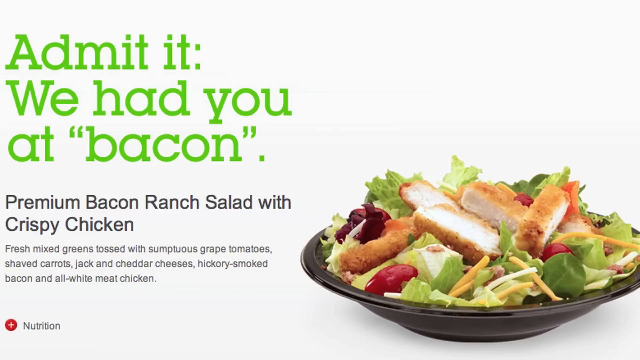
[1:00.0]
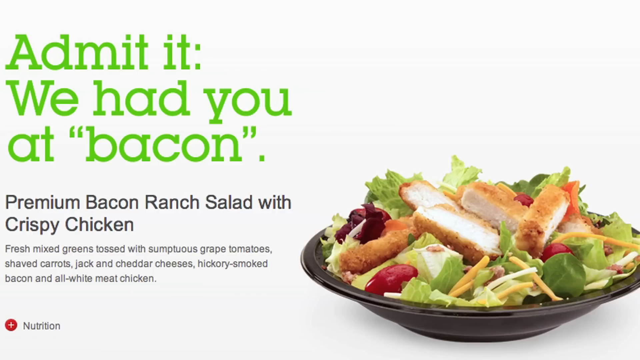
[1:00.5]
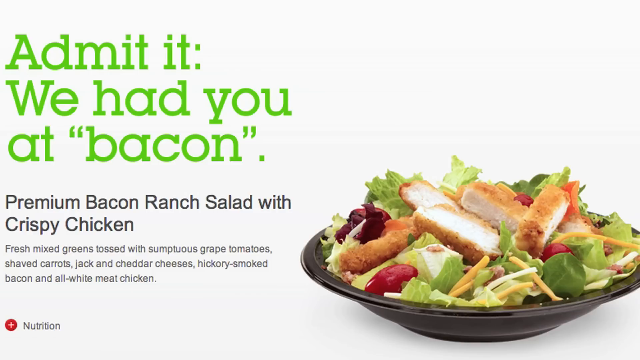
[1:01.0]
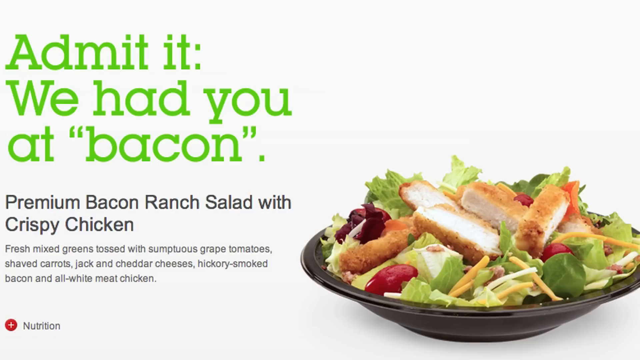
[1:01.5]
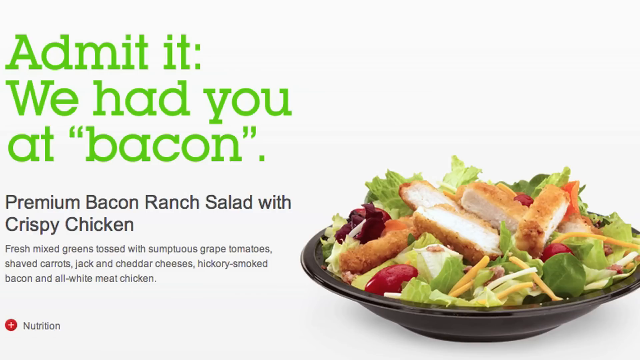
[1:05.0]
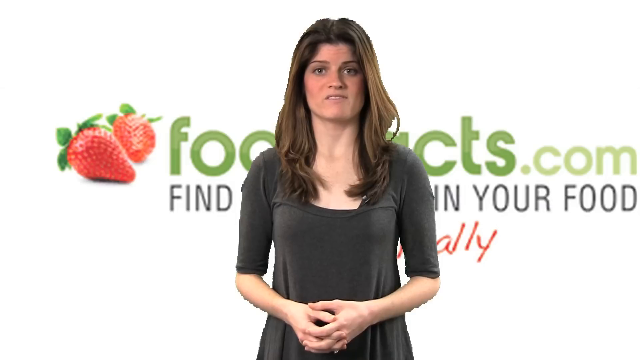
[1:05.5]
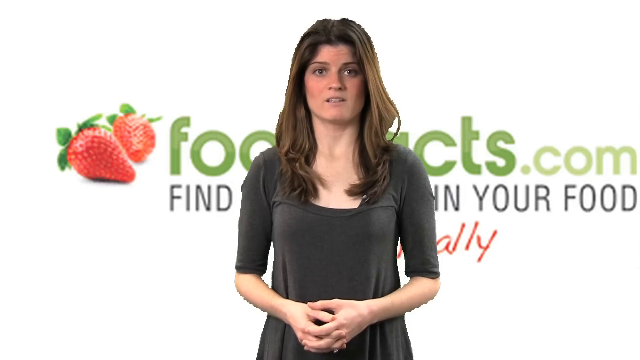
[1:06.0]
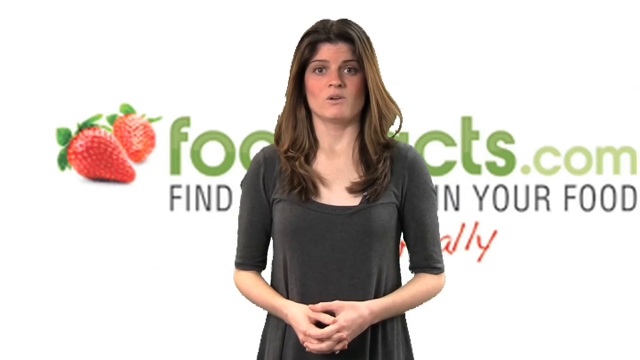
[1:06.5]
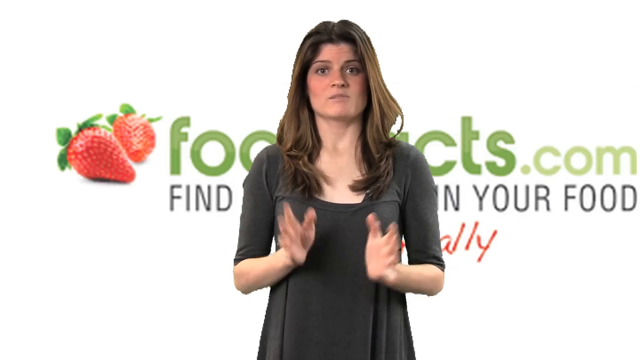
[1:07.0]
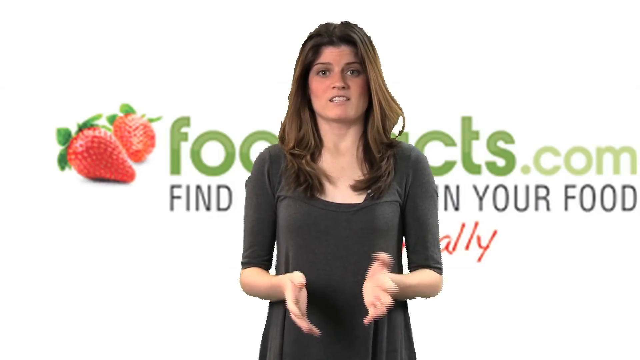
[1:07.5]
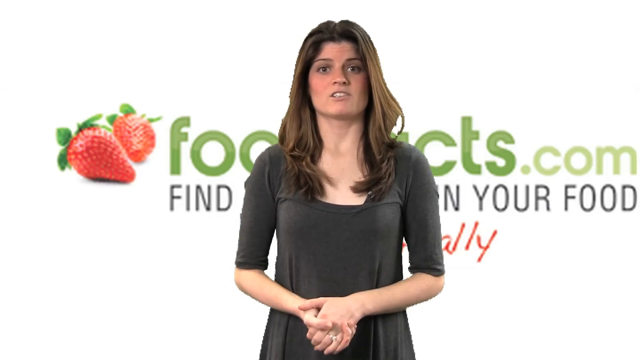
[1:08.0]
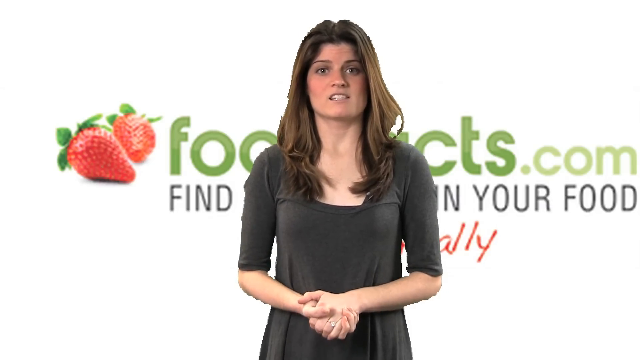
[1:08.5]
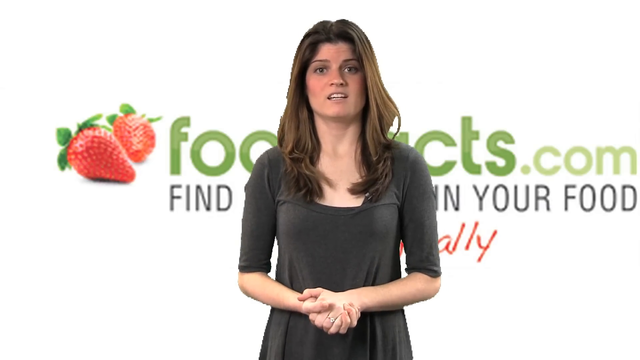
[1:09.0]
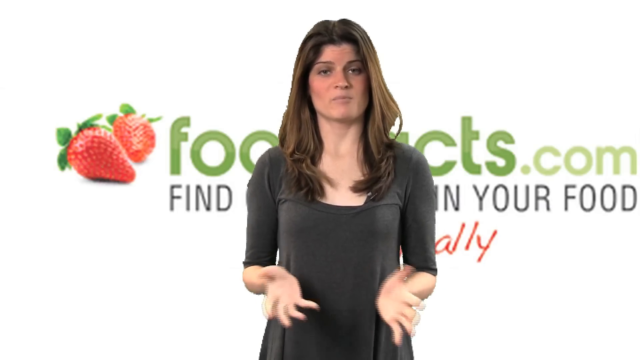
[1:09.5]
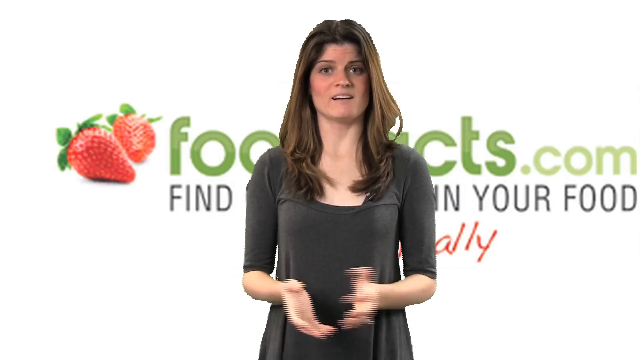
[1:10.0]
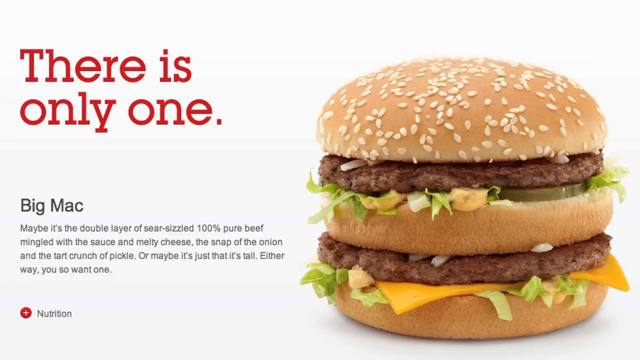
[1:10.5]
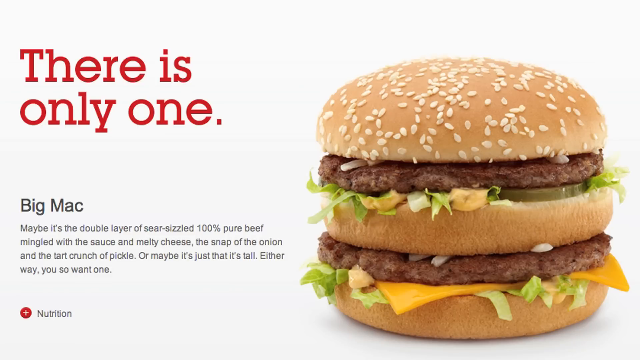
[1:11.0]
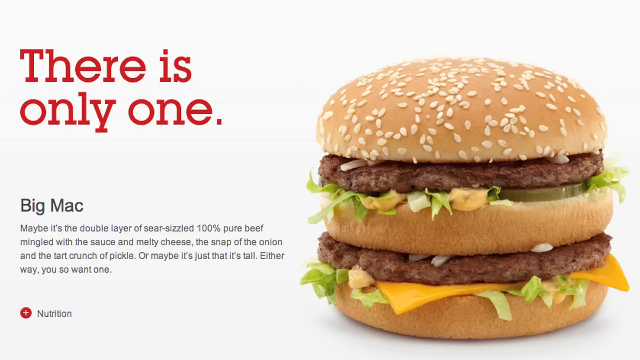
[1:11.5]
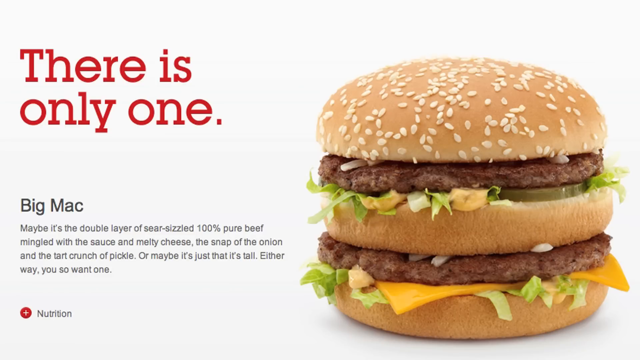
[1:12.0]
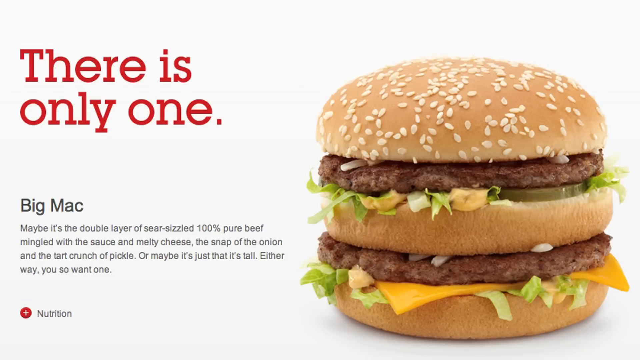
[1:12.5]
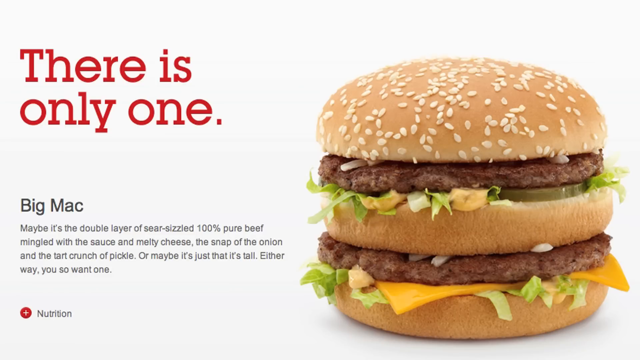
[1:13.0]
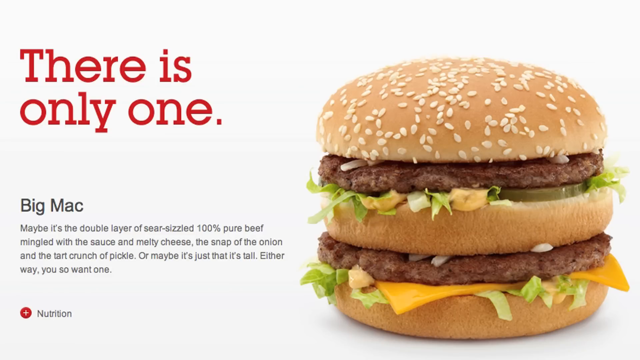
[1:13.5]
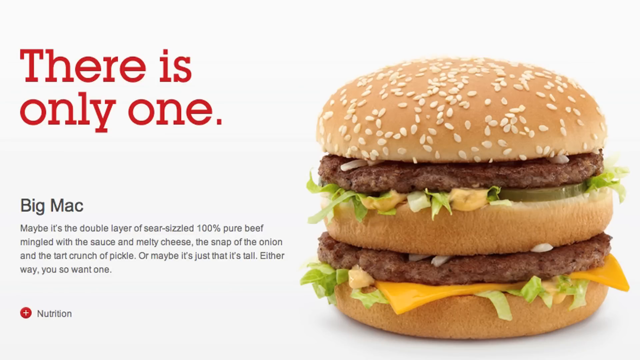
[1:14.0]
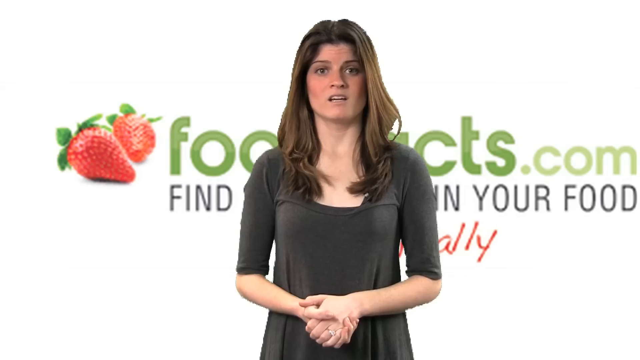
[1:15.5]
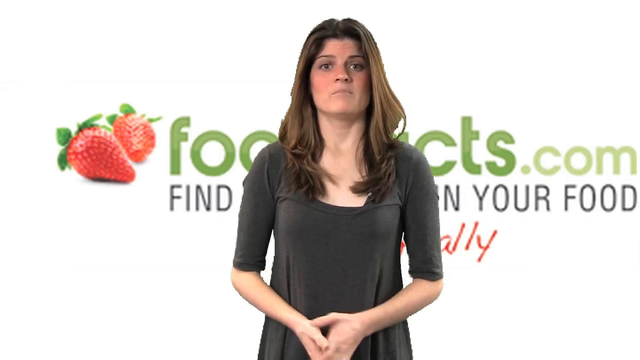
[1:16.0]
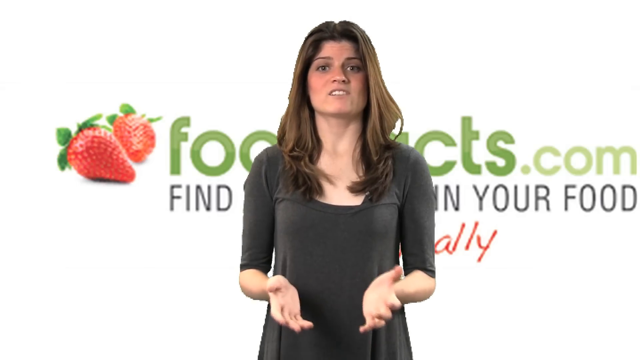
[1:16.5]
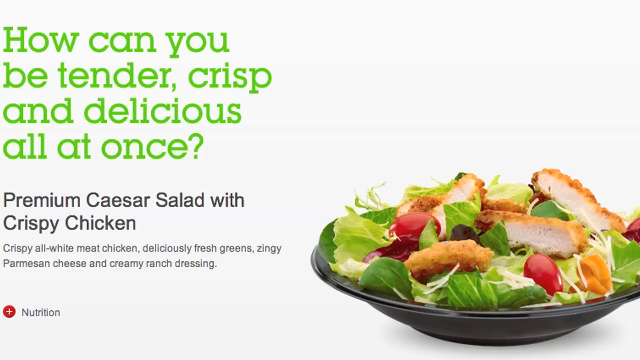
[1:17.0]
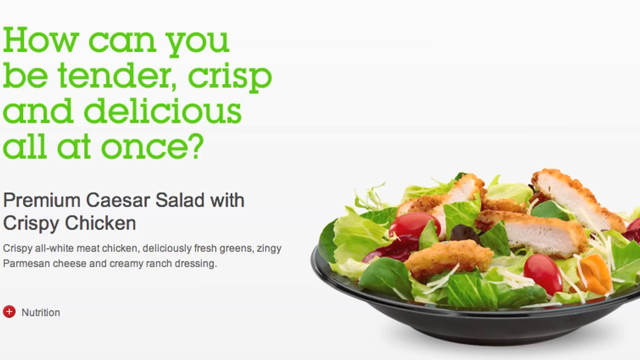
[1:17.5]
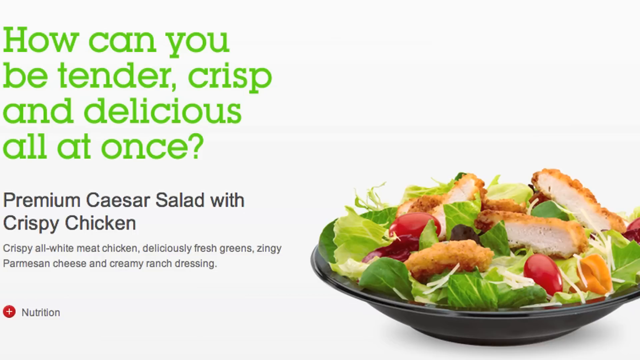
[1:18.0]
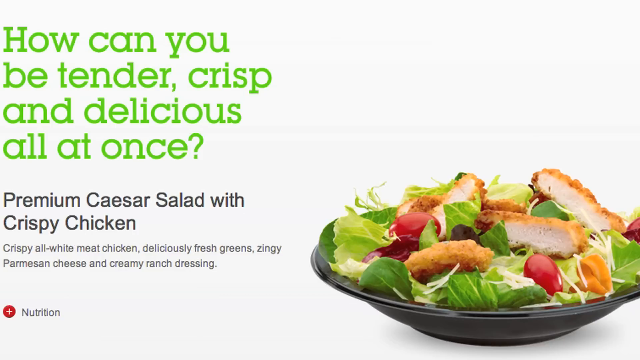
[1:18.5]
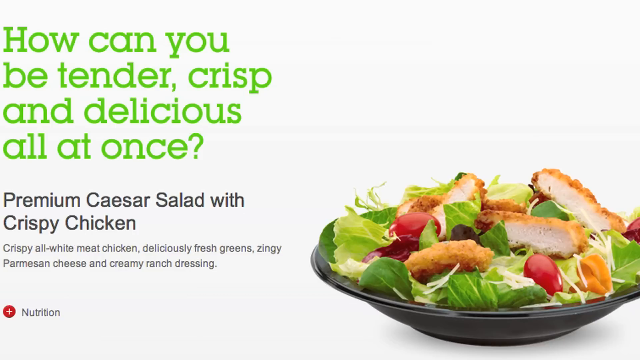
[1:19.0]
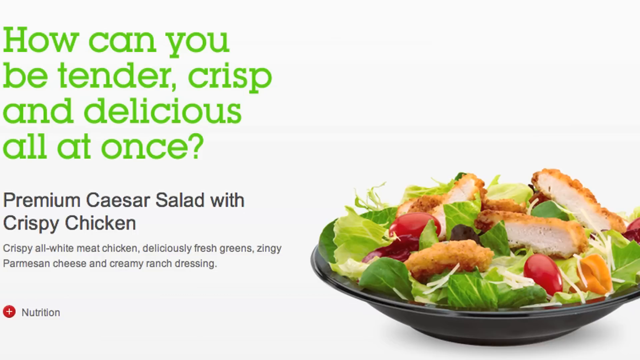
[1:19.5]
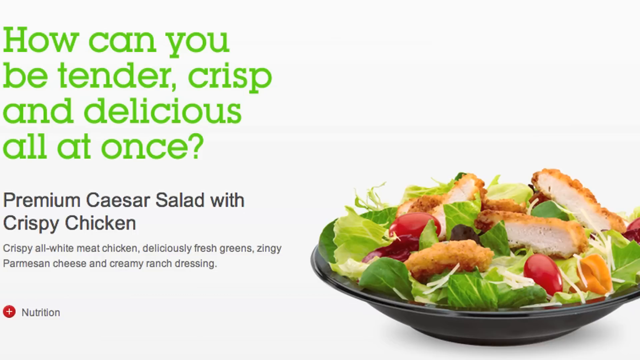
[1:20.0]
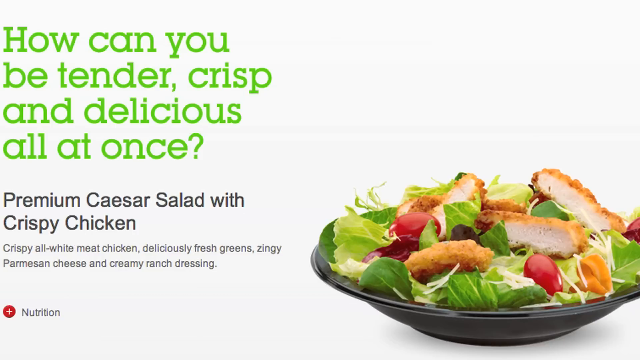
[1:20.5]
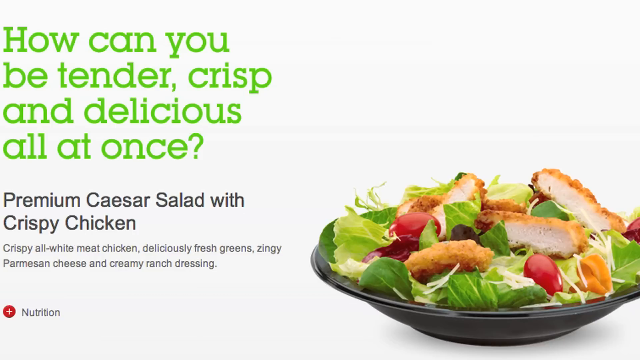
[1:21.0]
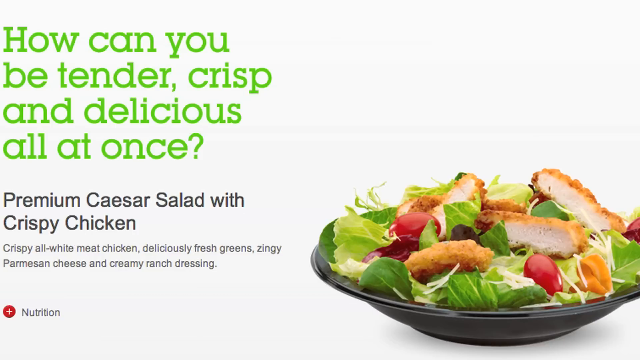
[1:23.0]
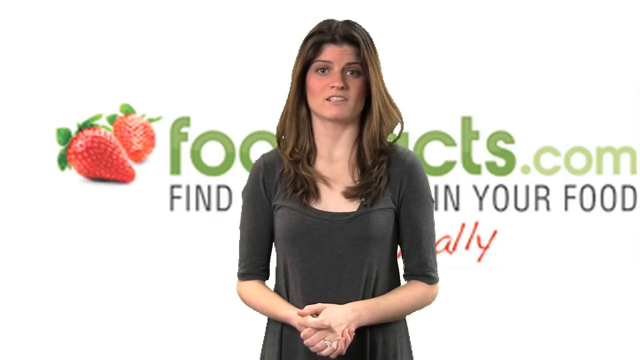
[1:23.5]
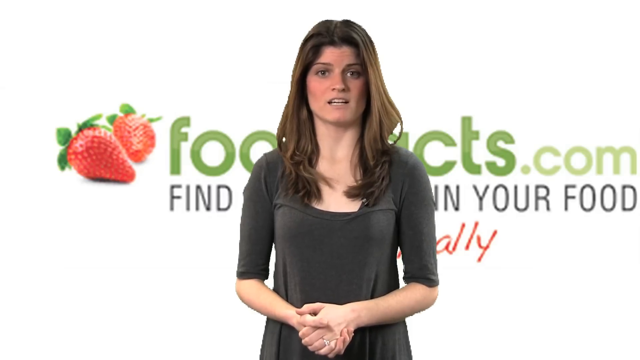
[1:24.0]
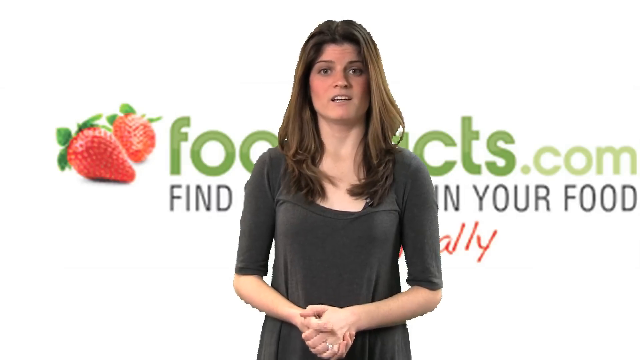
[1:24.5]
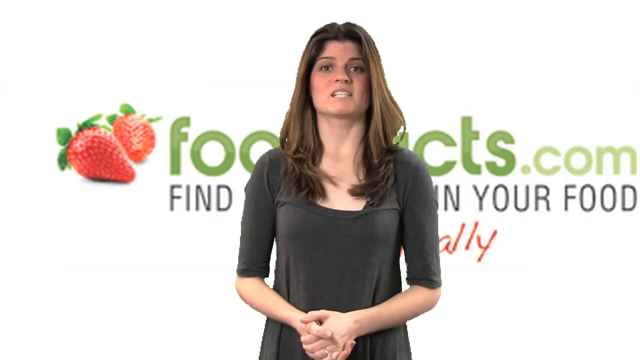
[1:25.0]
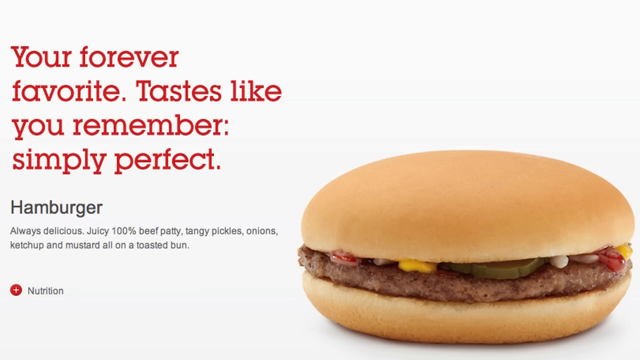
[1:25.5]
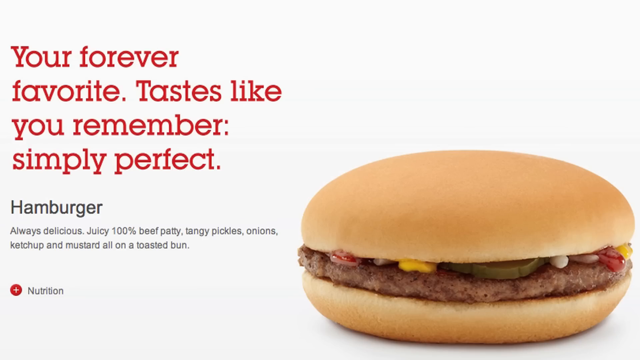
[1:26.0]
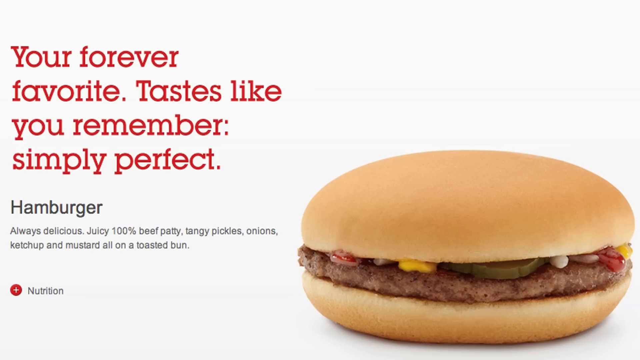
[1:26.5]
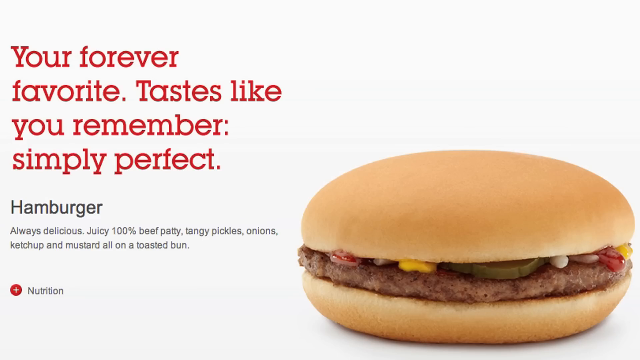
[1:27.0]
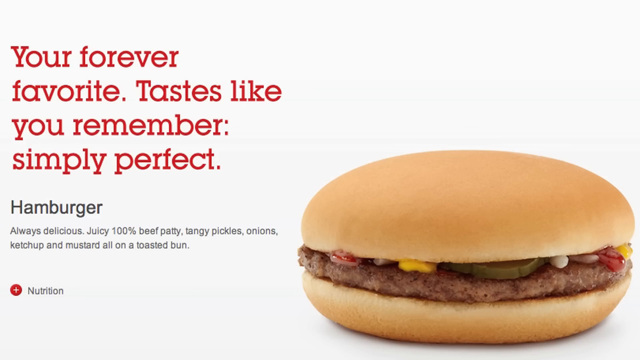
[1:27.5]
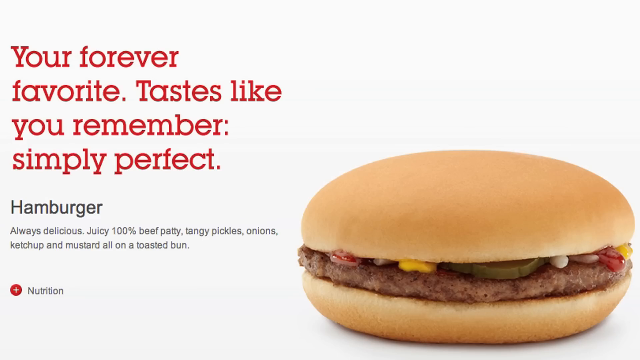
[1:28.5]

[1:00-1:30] The premium bacon ranch salad with crispy chicken is shown again, with a photo of the food, the description and the tagline. The woman speaks to the camera, pointing her fingers toward it as she alternates between holding her hands together and bringing them apart. Next a photo of the Big Mac appears with its description and the tagline "there's only one". The woman speaks again, using hand gestures. The premium Caesar salad with crispy chicken is then shown again with its tagline, photo and description. Finally a hamburger is shown with a description and the tagline "Your forever favorite. Tastes like you remember. Simply perfect."